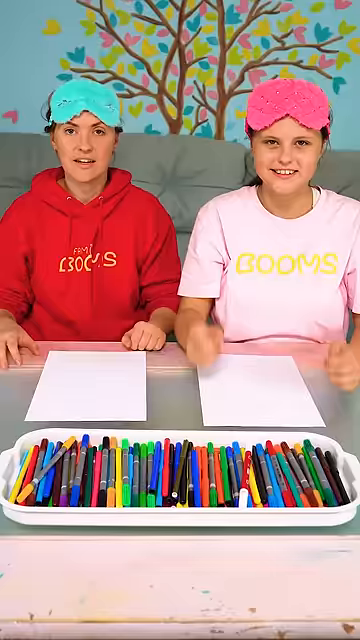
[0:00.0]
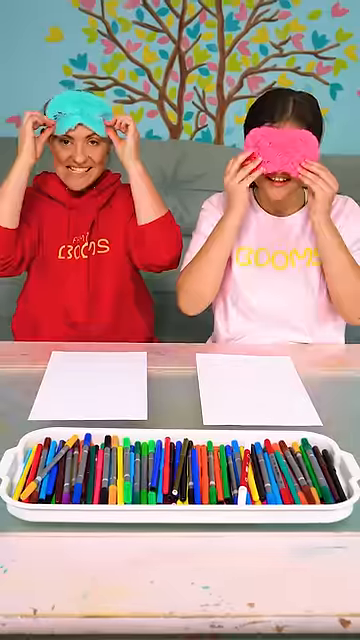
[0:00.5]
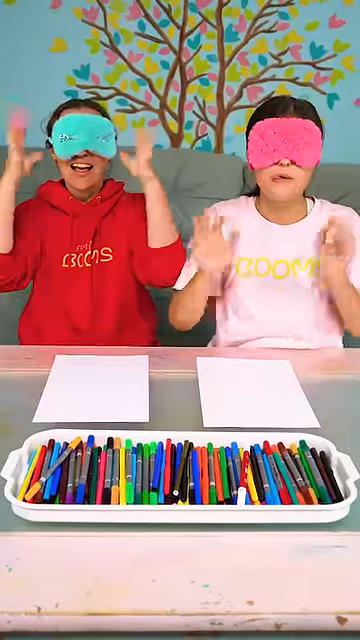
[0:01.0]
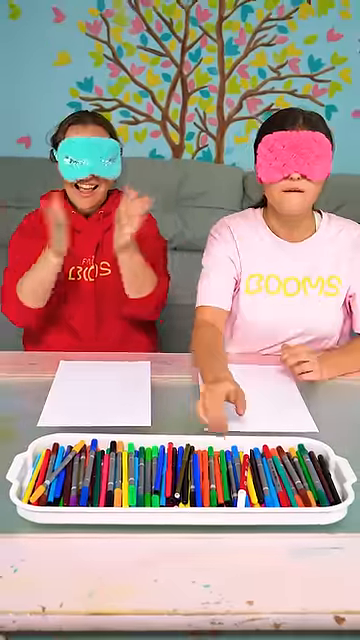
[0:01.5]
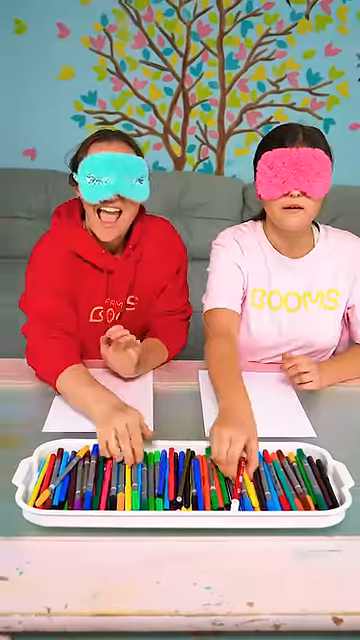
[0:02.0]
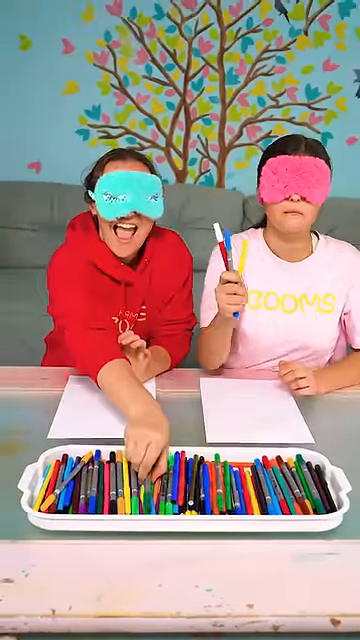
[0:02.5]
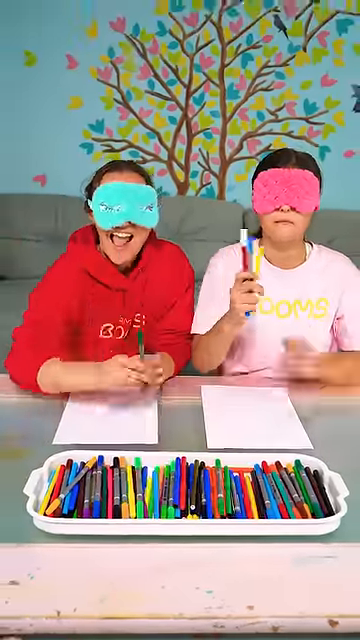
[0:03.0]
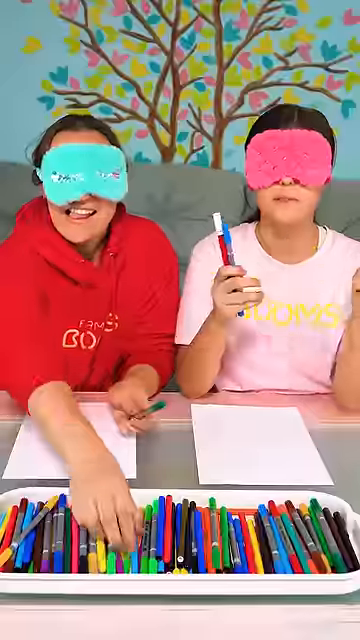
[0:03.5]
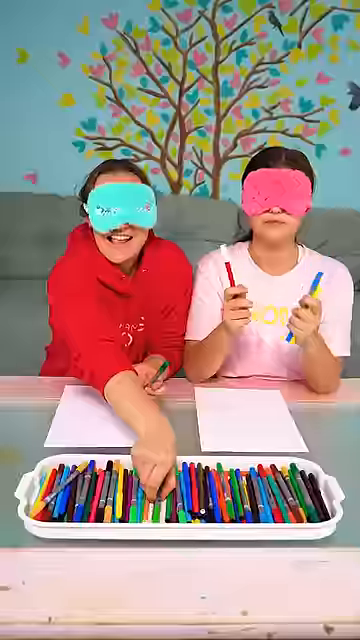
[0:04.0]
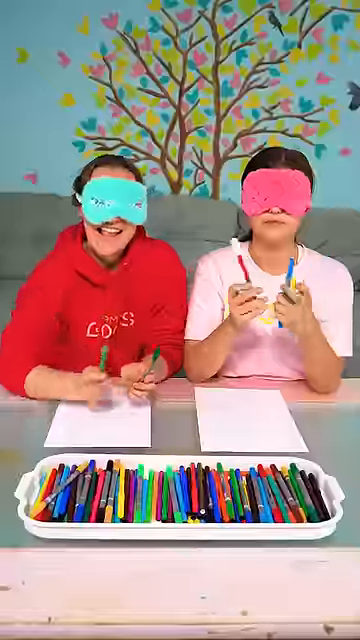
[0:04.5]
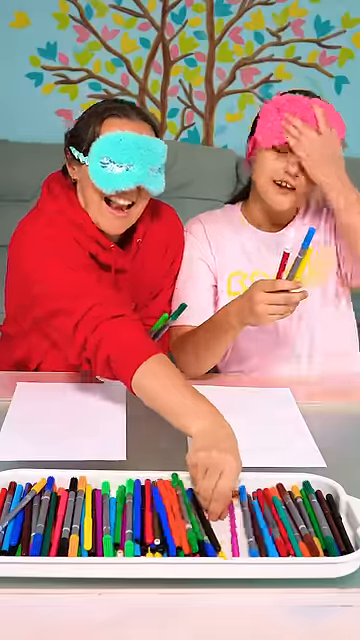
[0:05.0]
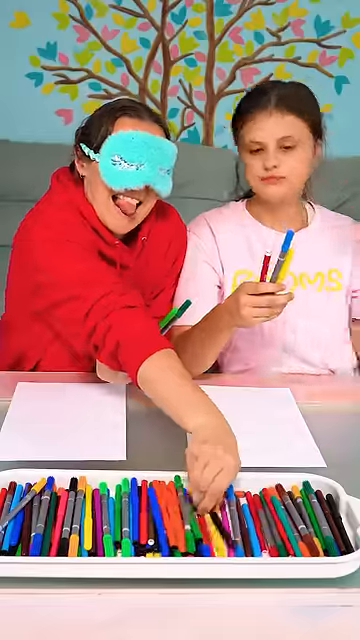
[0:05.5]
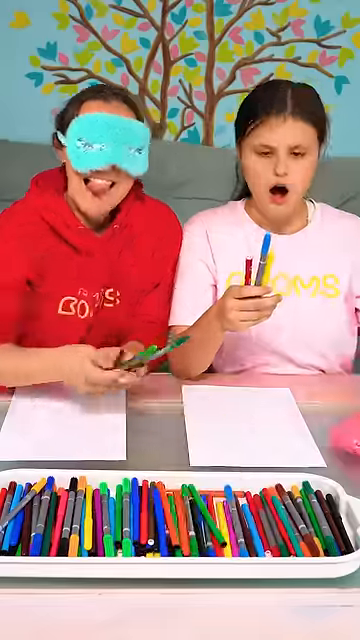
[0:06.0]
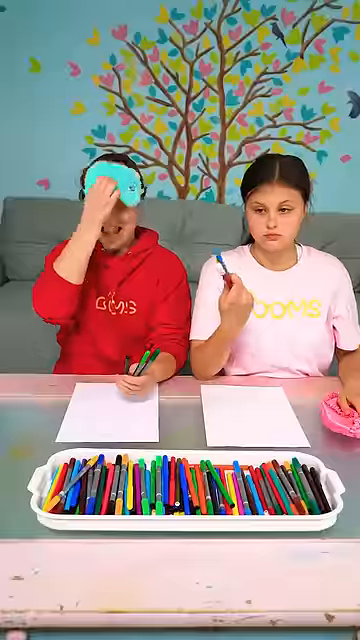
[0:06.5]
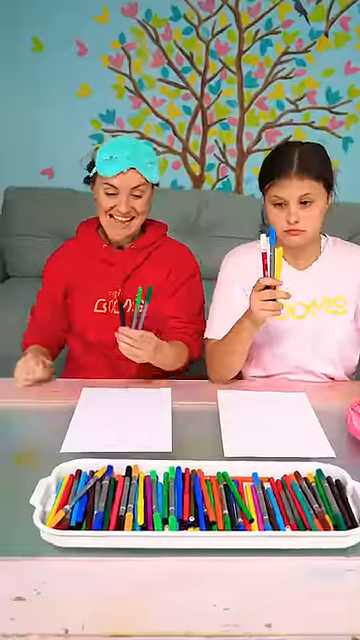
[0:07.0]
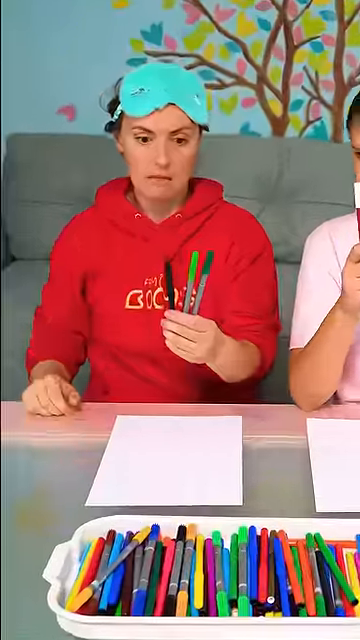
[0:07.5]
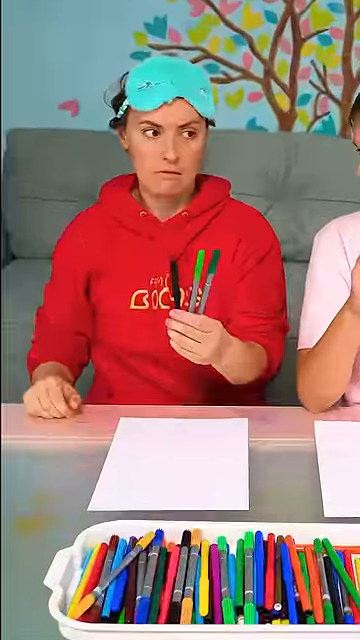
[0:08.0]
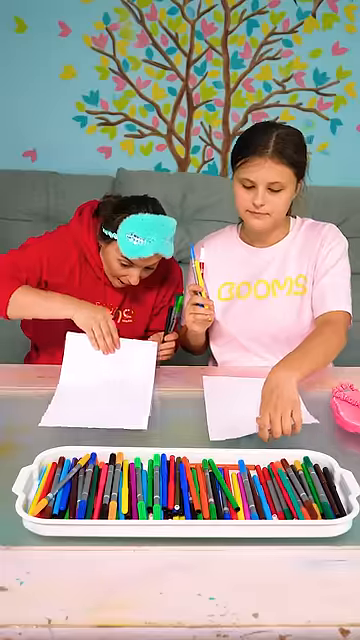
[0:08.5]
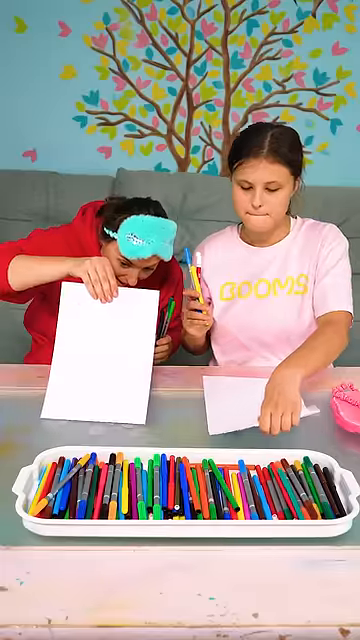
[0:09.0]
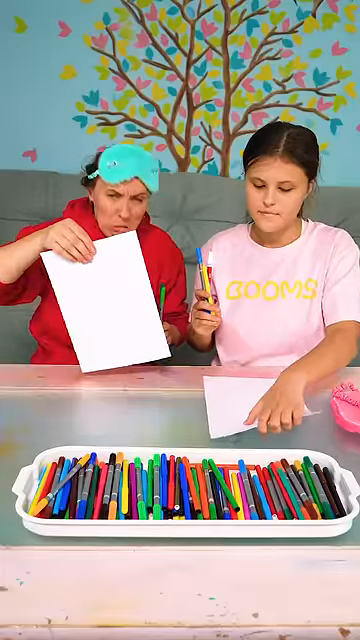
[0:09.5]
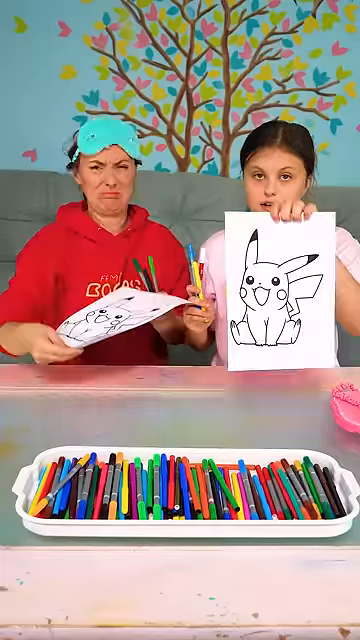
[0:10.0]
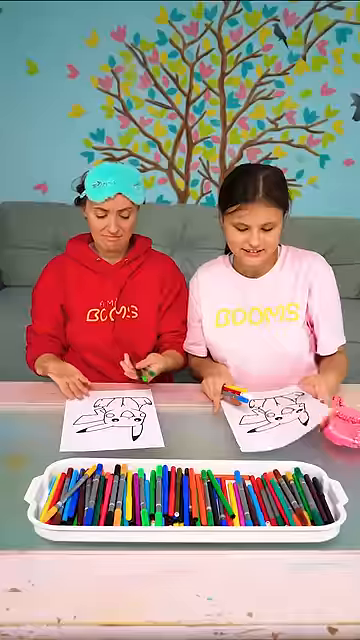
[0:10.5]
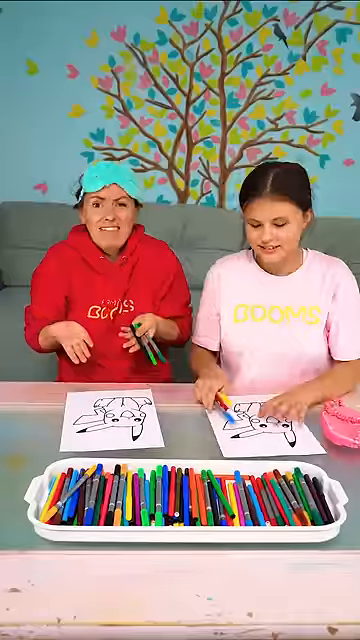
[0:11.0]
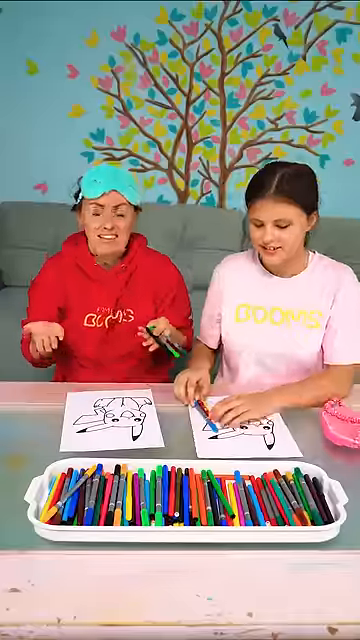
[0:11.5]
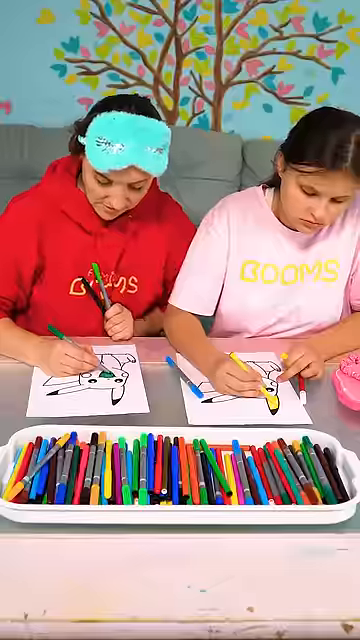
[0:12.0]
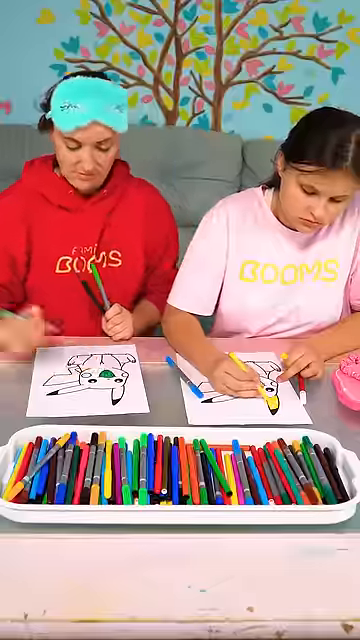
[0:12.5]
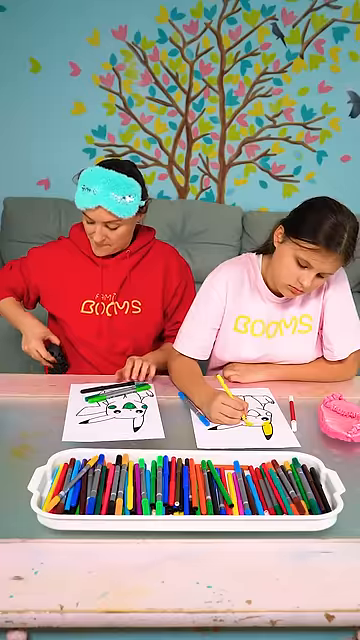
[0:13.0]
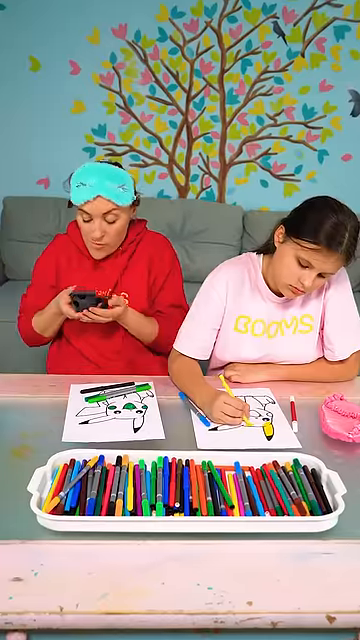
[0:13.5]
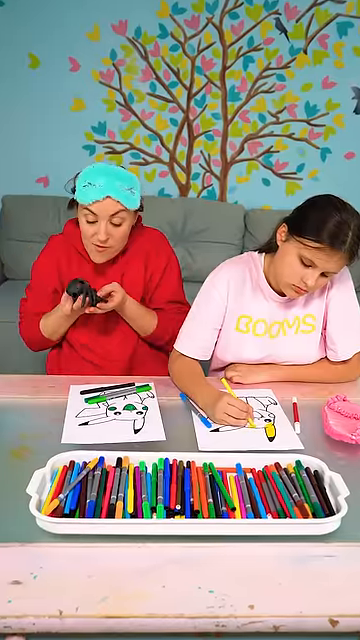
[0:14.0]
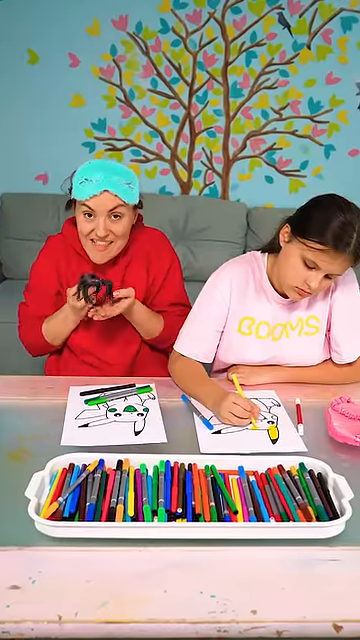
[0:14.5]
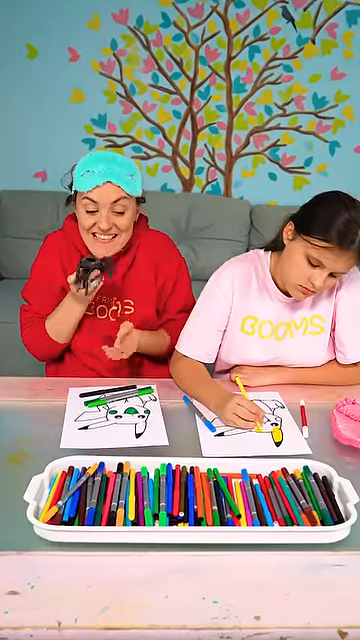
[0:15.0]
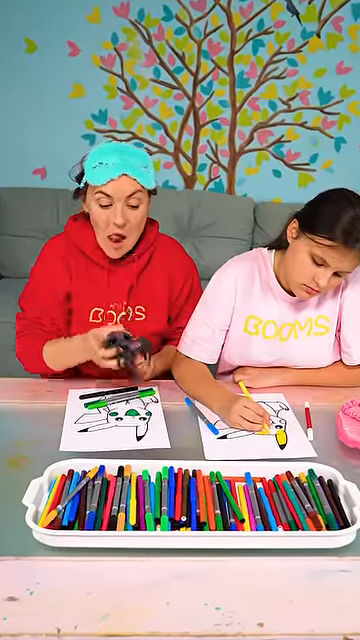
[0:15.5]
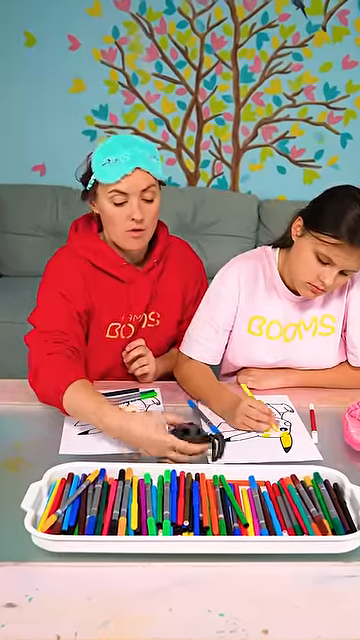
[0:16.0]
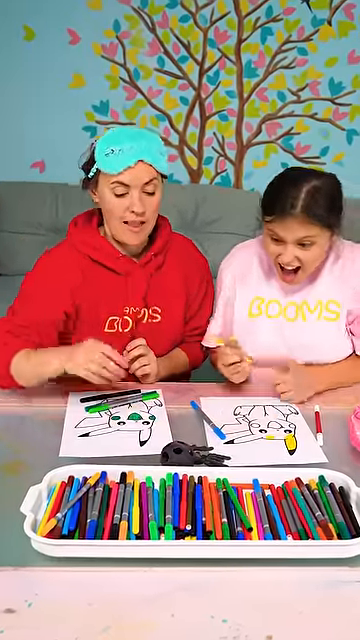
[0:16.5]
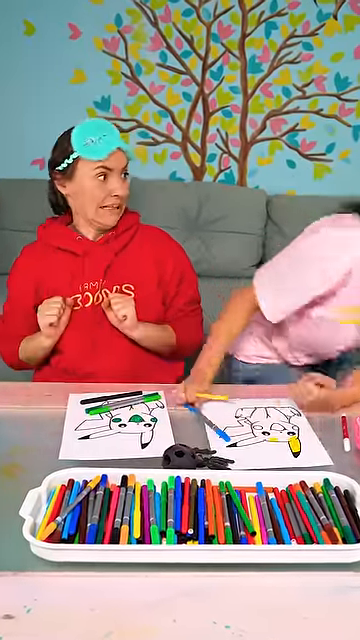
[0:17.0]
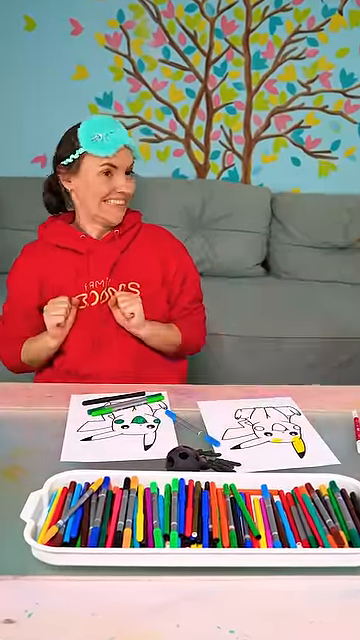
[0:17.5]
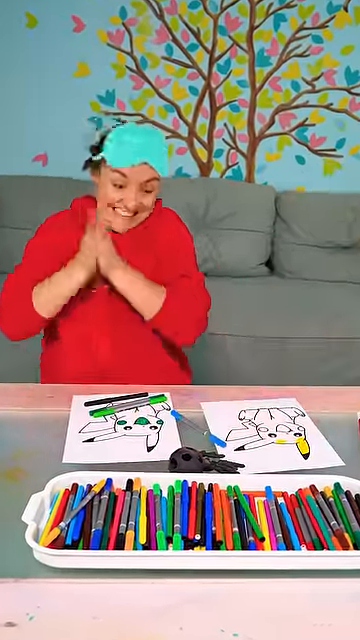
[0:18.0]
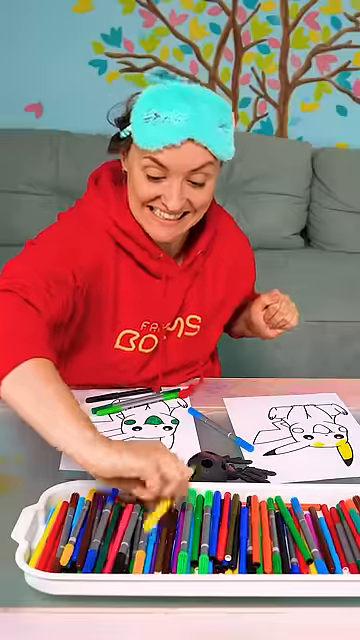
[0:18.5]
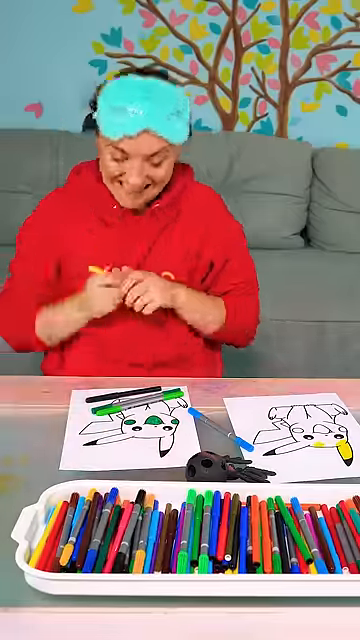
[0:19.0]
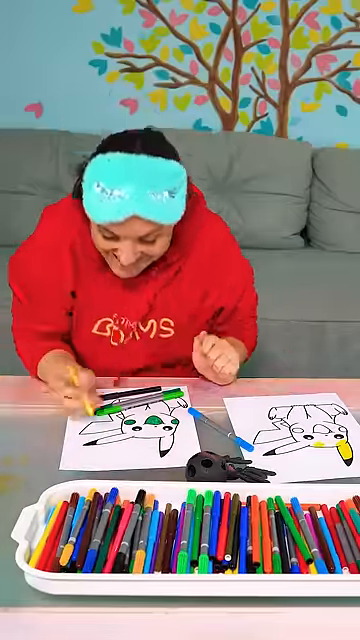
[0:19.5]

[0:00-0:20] A woman and a girl appear, the woman in a red hoodie and the girl in a light pink short-sleeve t-shirt. They look like they might be in a living room. The wall behind them is blue with paintings of a tree in kind of pastel colors, and immediately behind them is a gray couch. They look like they are sitting on the floor in front of the table. In front of them is a blank piece of paper and a large rectangular tray holding many different colored markers. The woman and the girl put on blindfolds, reach their hands into the tray of markers, and each pick out three different colors. They take off their blindfolds, look at the three colors they picked, and flip over their drawings, which look like coloring book pages. Both have the same page, showing the Pikachu character.